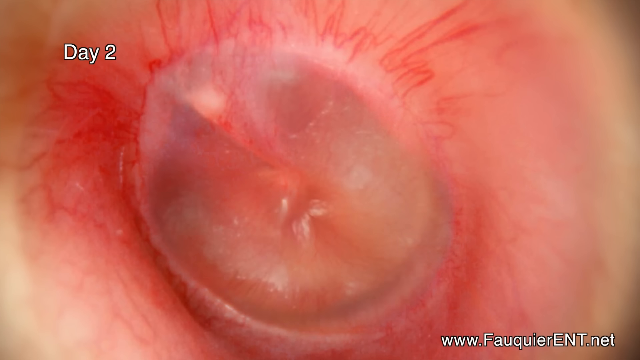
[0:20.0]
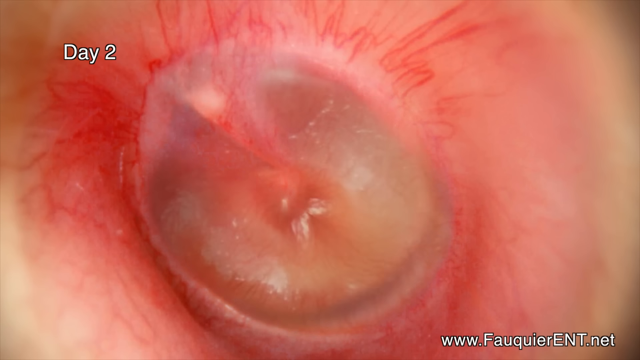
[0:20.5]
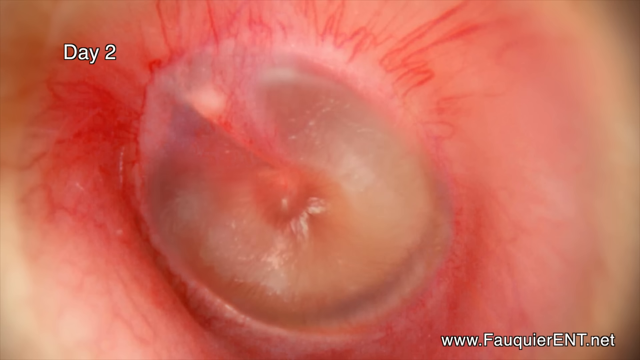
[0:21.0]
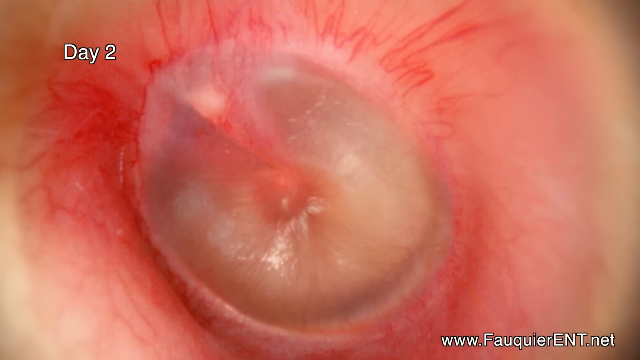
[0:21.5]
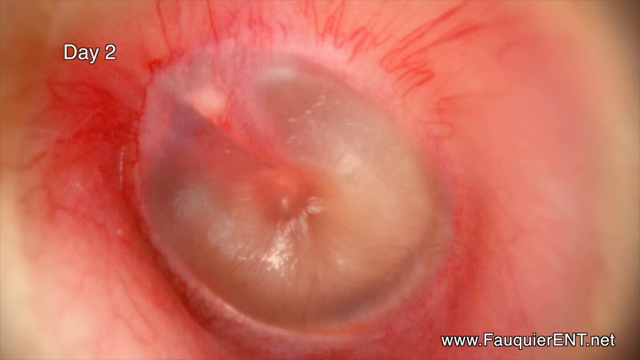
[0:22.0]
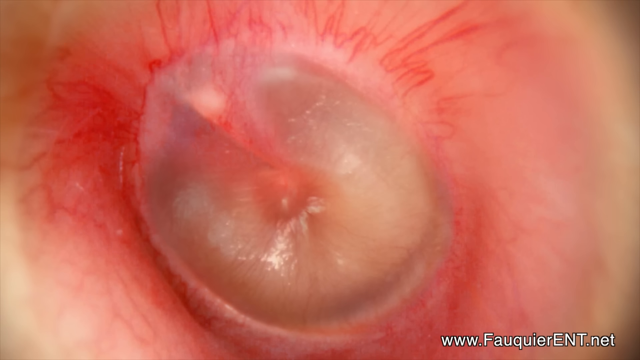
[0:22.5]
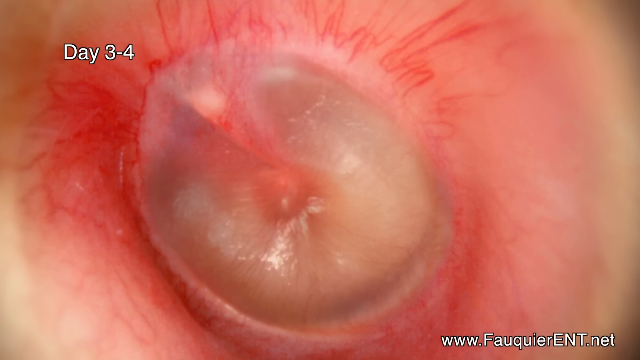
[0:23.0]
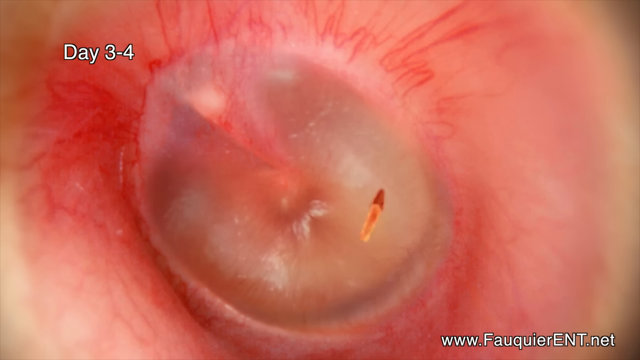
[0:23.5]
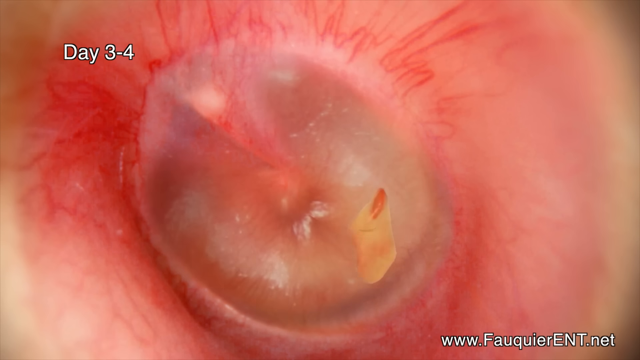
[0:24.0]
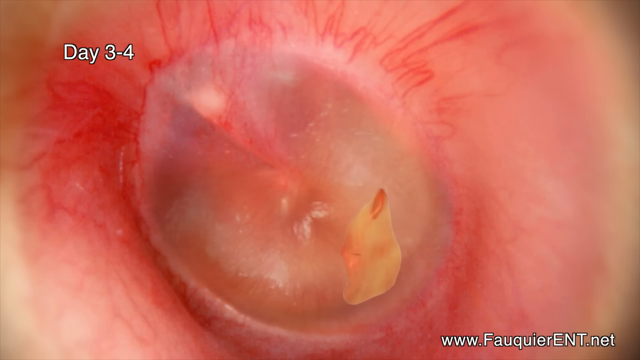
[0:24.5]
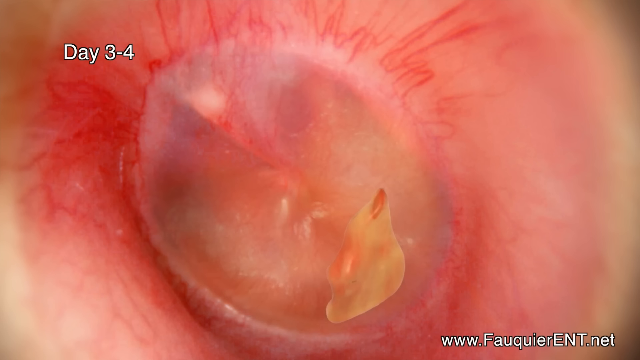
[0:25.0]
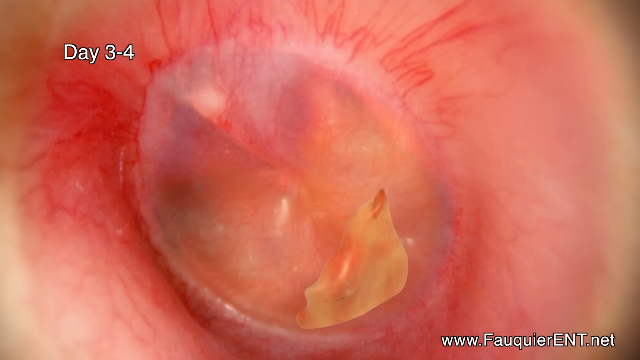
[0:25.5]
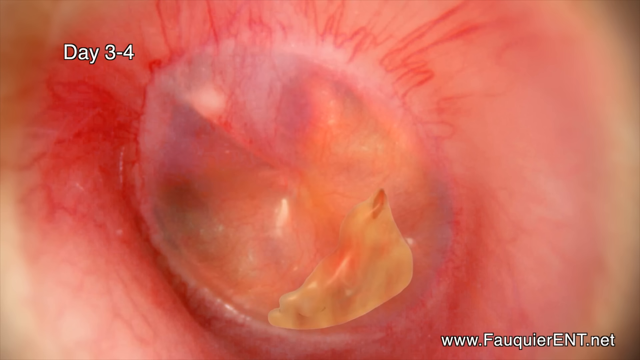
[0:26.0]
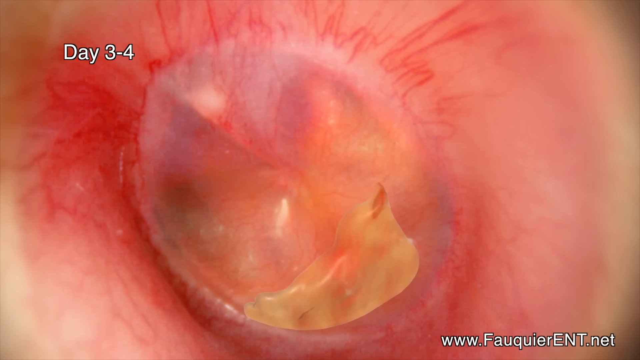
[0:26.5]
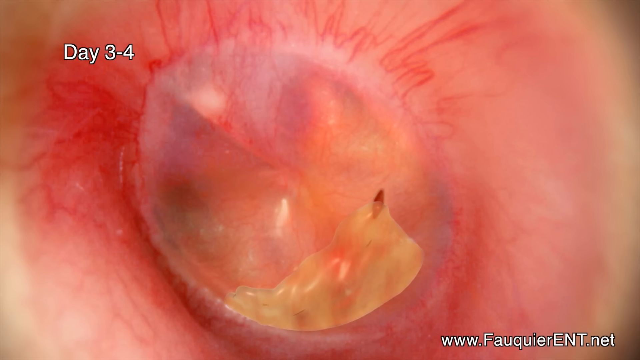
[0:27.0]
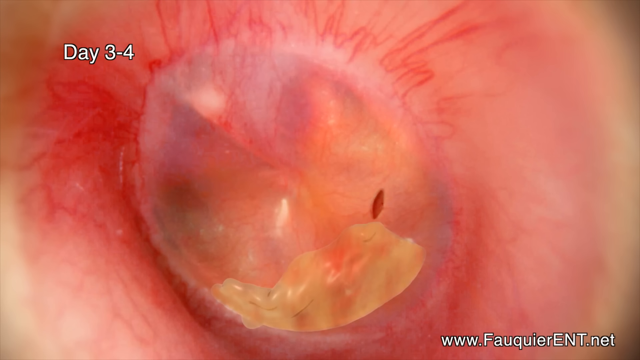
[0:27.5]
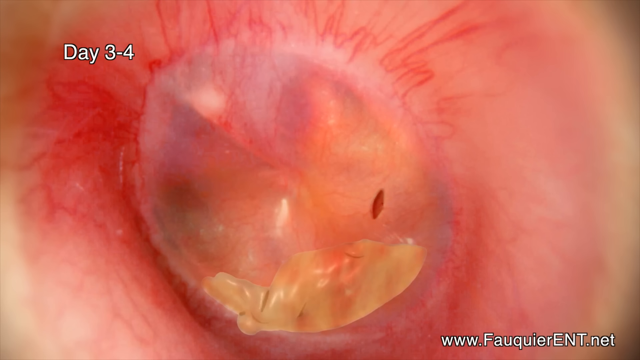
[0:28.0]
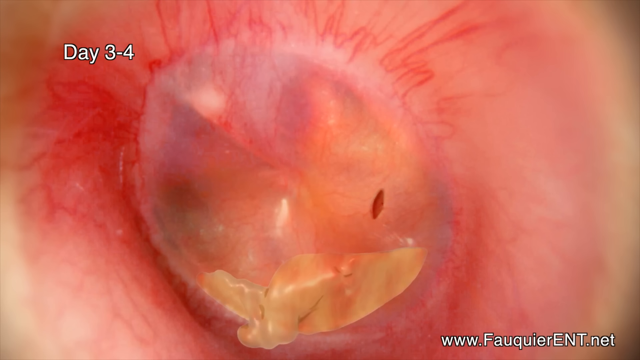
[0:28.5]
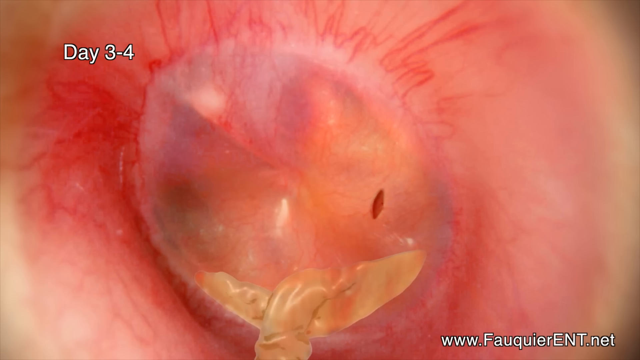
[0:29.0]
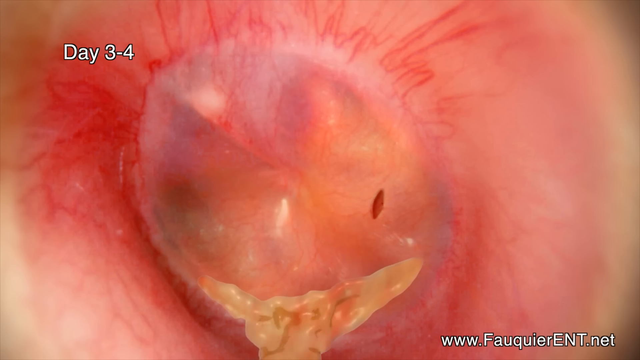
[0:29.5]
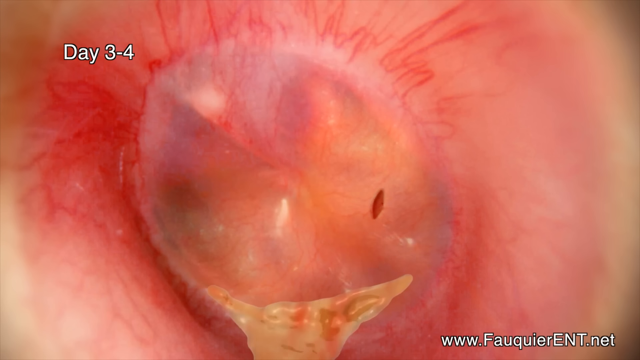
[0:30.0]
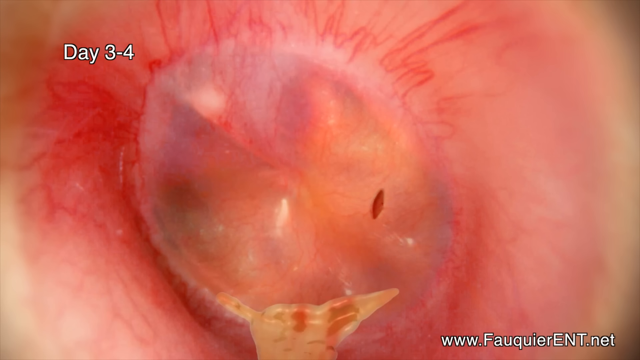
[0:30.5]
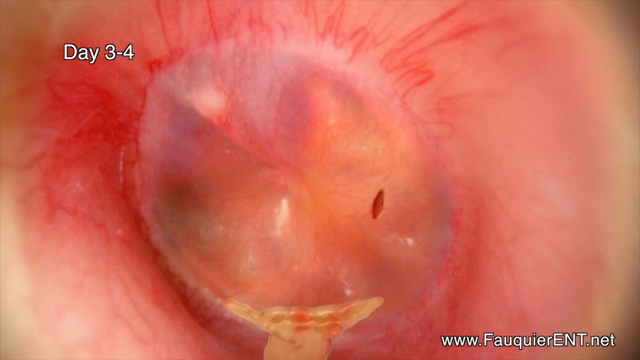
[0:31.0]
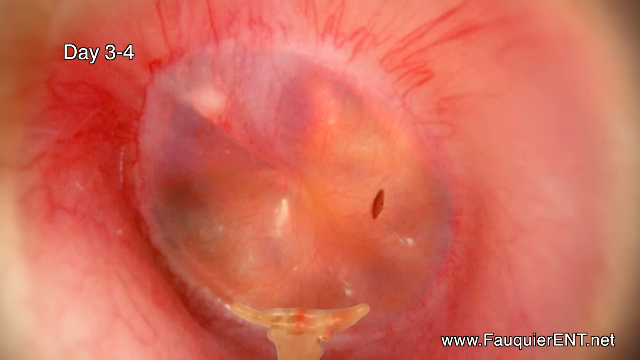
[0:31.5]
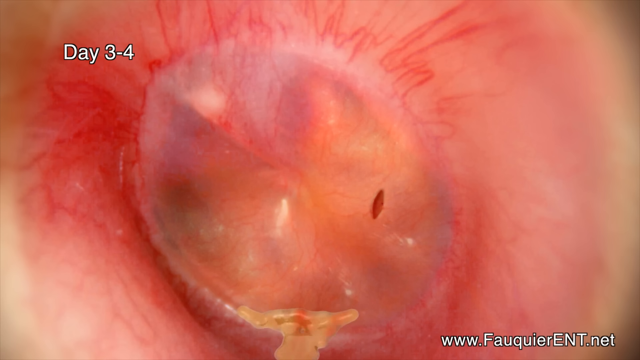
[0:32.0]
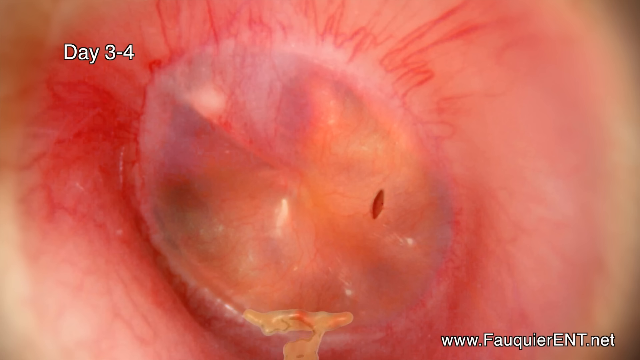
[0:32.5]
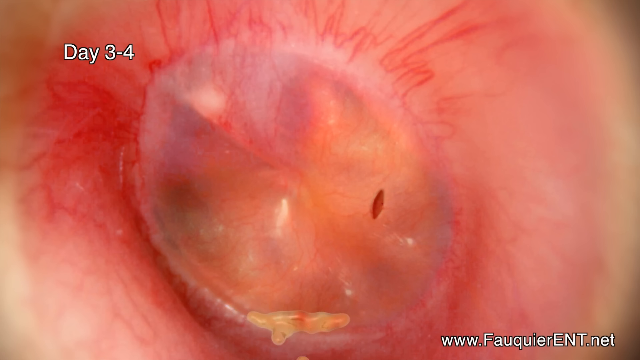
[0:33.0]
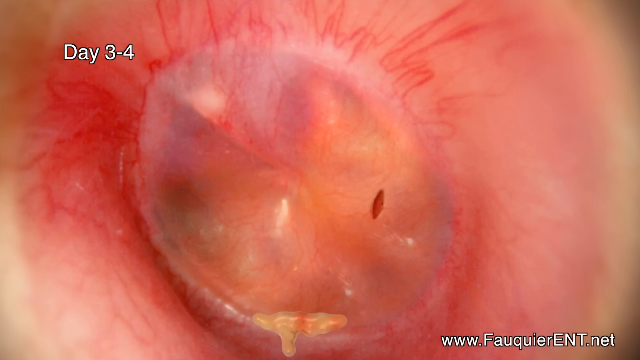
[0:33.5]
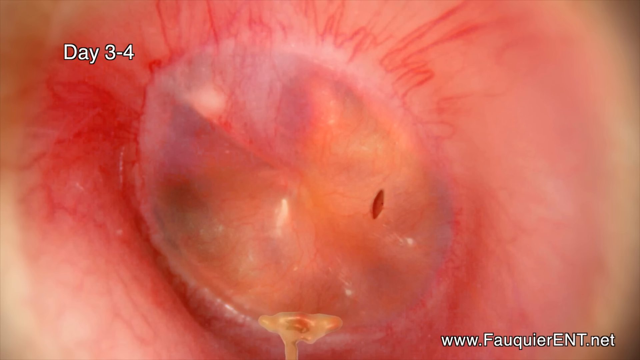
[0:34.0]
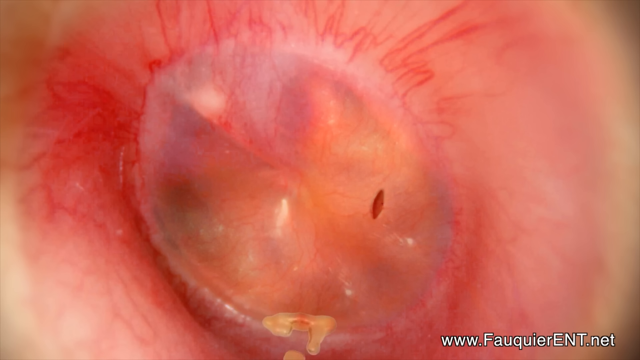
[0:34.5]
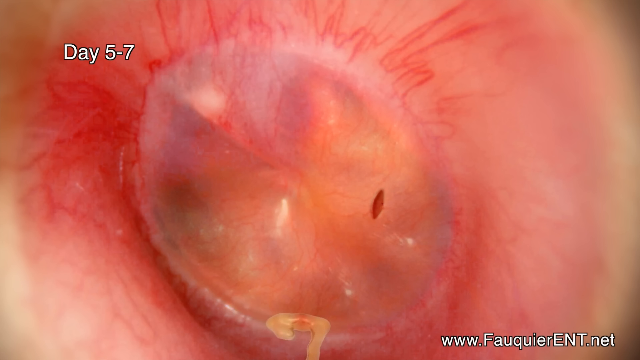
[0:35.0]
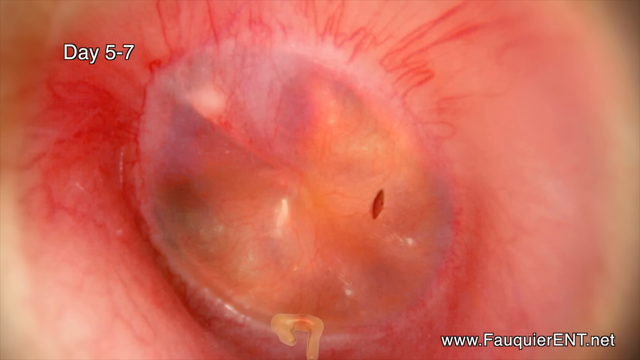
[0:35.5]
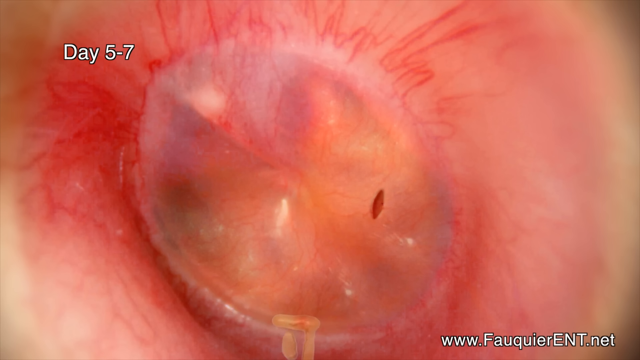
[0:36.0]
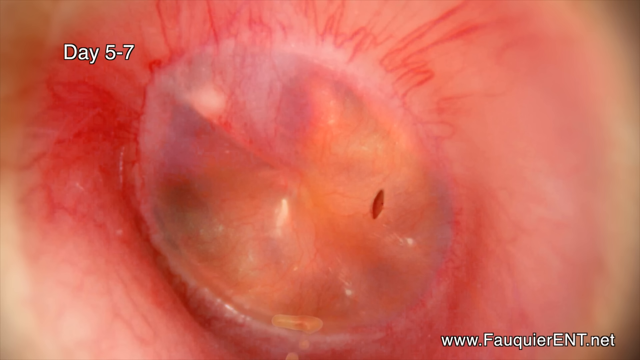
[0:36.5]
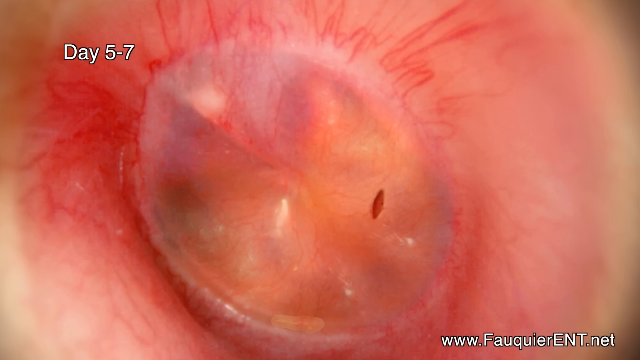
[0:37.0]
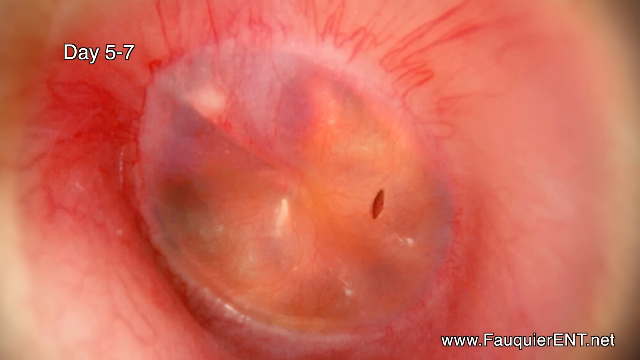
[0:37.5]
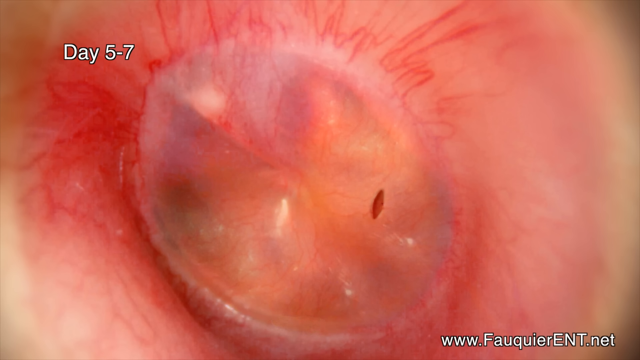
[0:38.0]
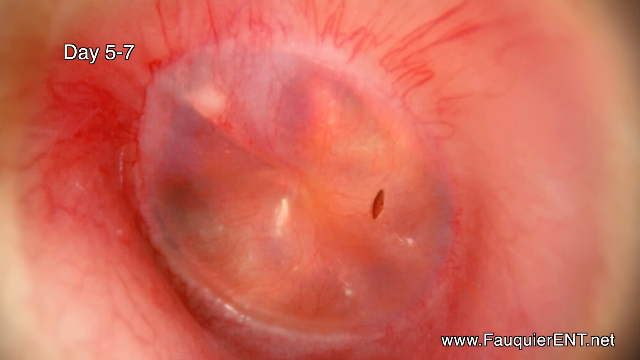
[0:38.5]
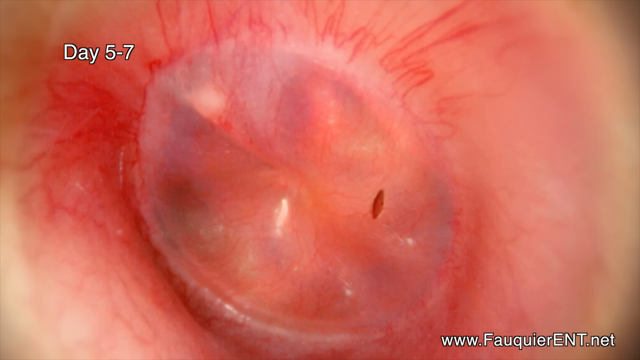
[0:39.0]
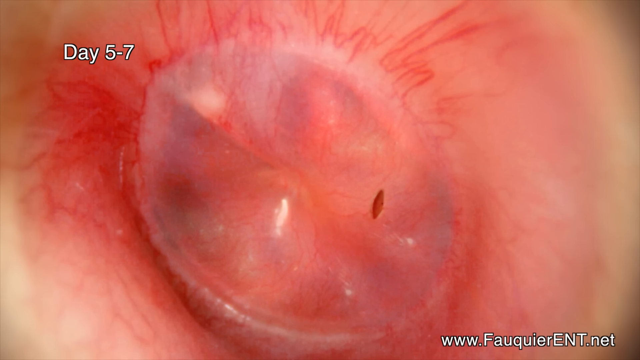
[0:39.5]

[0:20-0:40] In the middle is a circle that is kind of transparent, with something seemingly behind it. Within the first few seconds the middle part becomes more yellow. At day 3 to 4 this middle layer is punctured and yellow pus starts to seep out, leaking into the bottom middle and seemingly out of the ear. At day 5 to 7 the hole remains, but the middle layer is no longer filled with the pus that was visible under the transparent layer; the punctured hole is on the right side of the transparent circle. The area surrounding the circle is still very red, with lines stemming up from it that look like blood vessels, and beyond that is skin of a more skin-tone color.